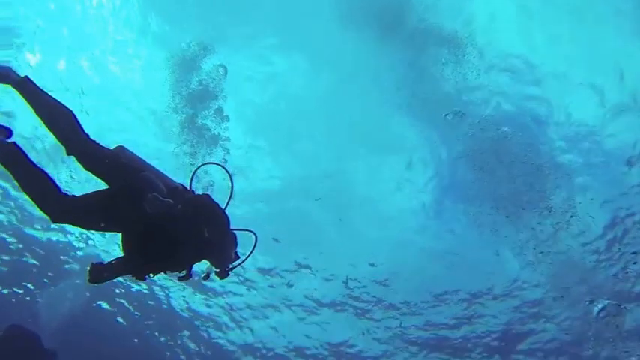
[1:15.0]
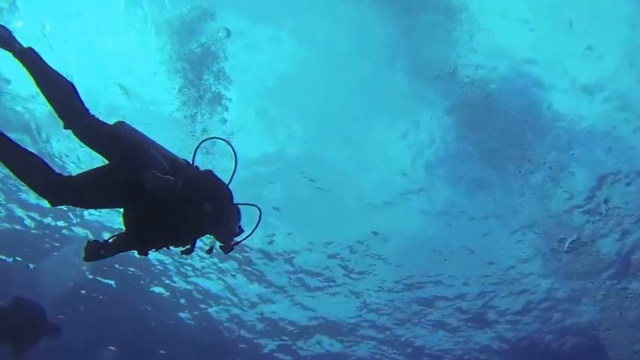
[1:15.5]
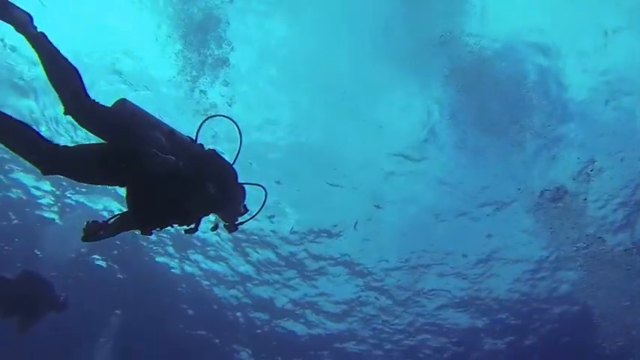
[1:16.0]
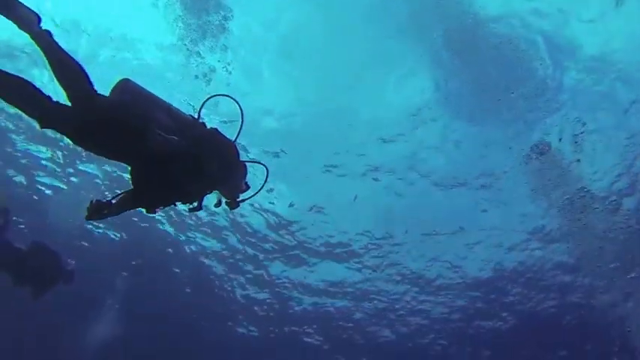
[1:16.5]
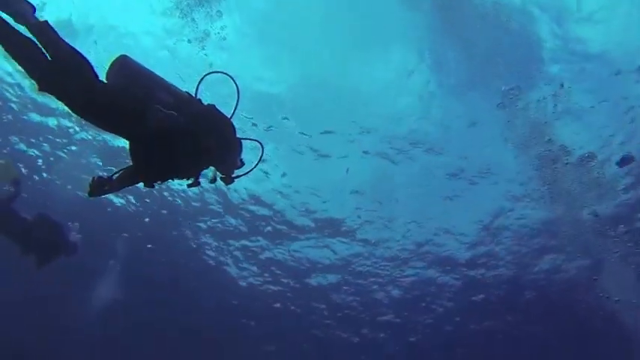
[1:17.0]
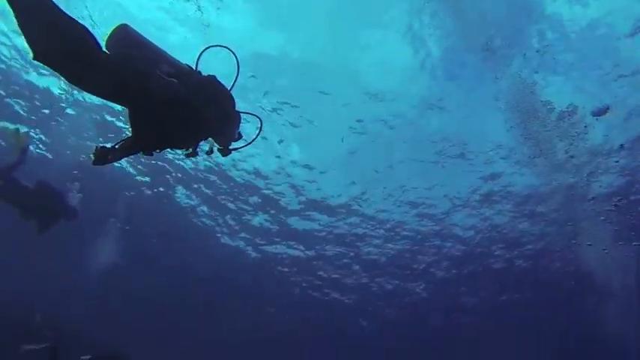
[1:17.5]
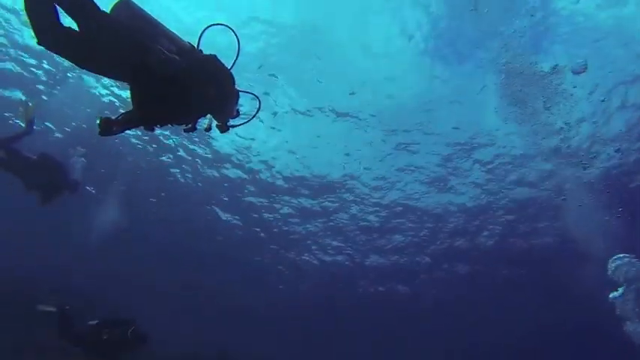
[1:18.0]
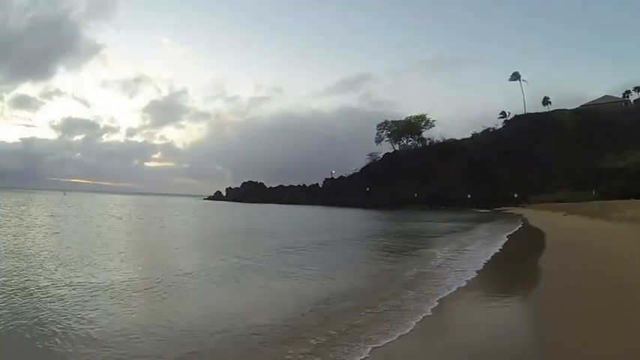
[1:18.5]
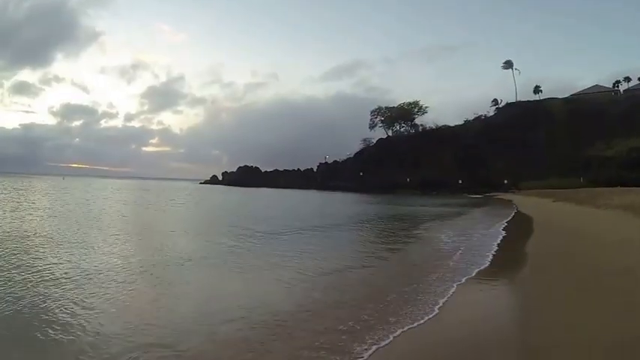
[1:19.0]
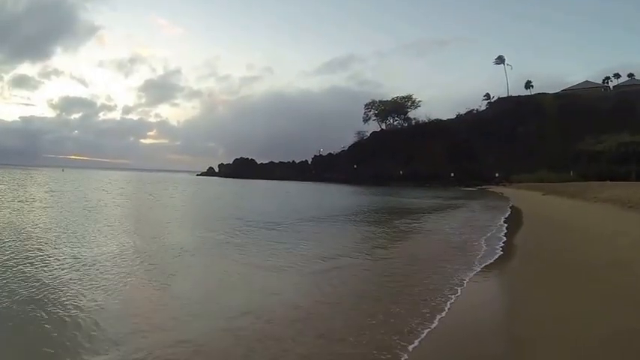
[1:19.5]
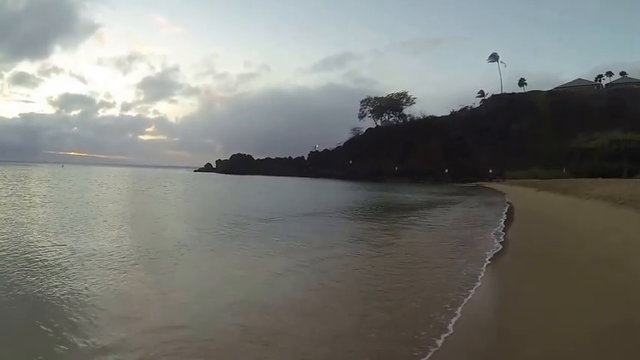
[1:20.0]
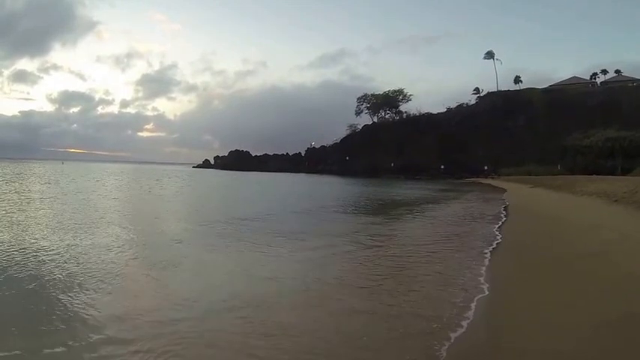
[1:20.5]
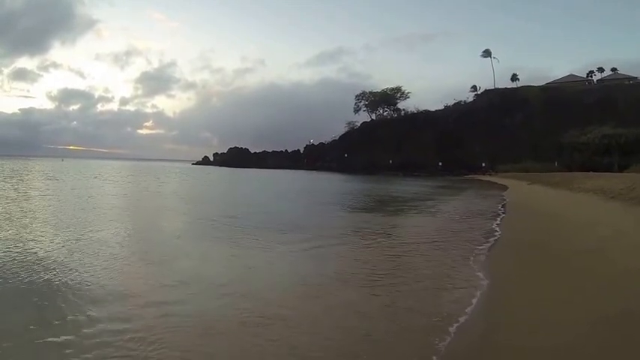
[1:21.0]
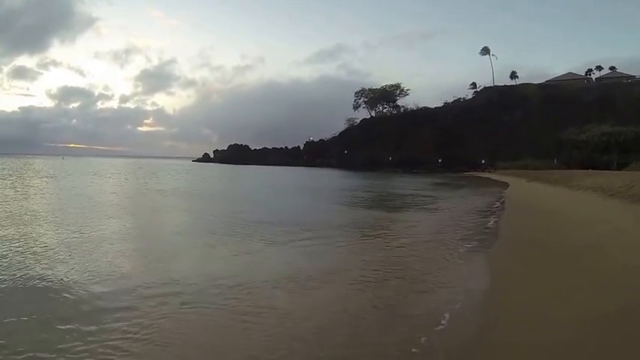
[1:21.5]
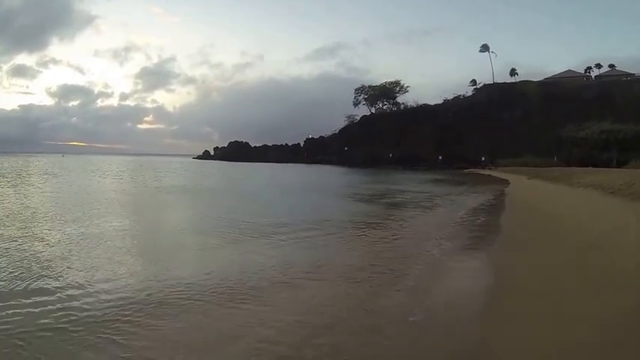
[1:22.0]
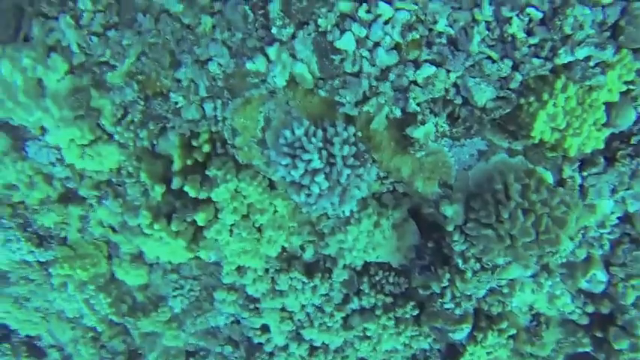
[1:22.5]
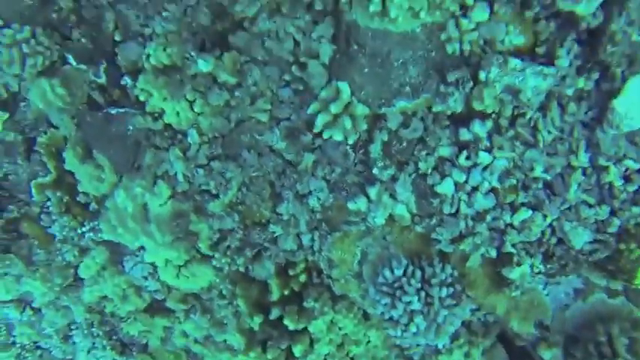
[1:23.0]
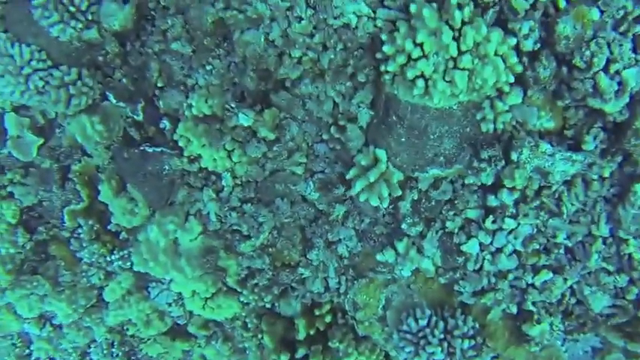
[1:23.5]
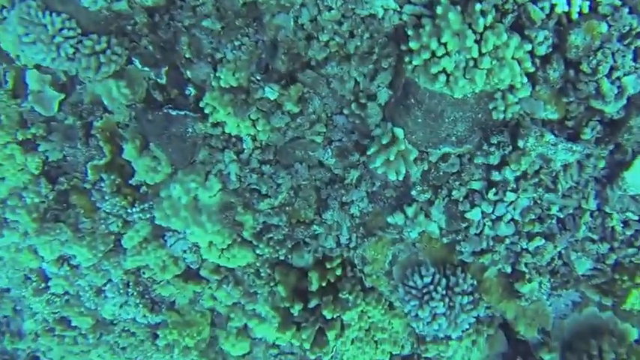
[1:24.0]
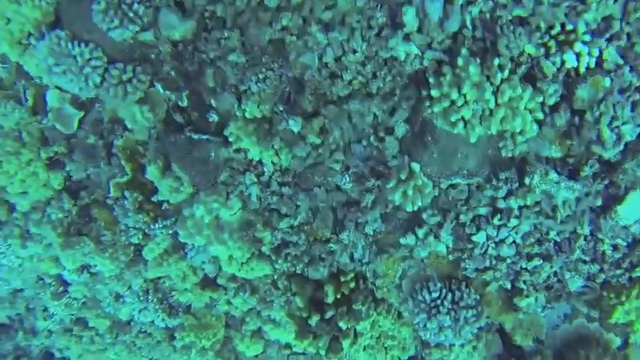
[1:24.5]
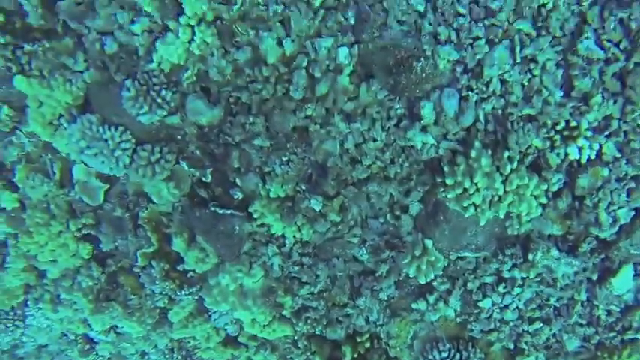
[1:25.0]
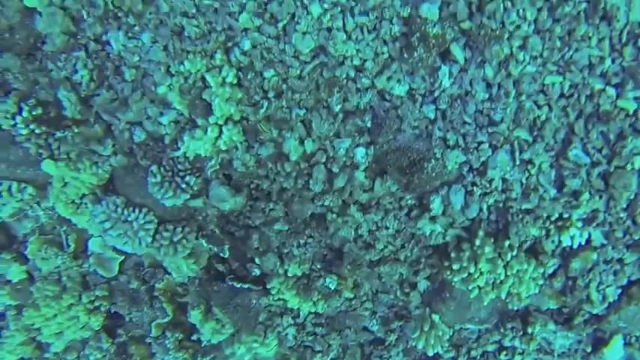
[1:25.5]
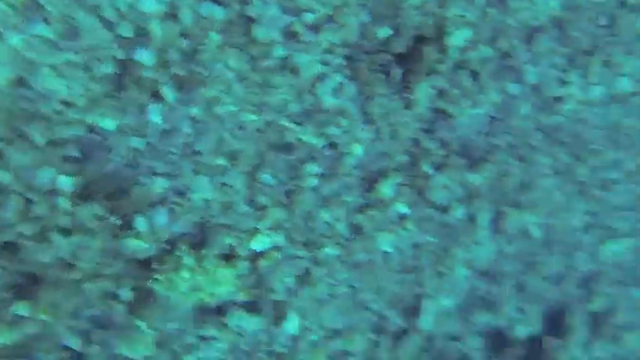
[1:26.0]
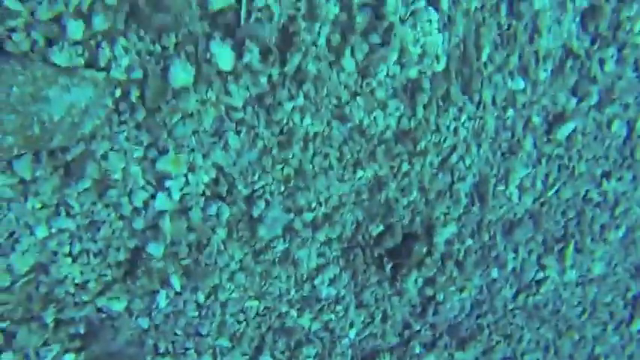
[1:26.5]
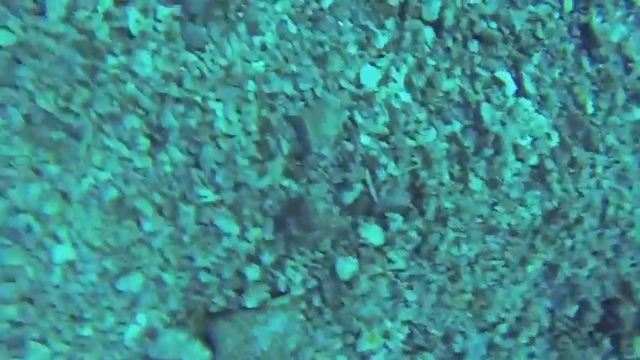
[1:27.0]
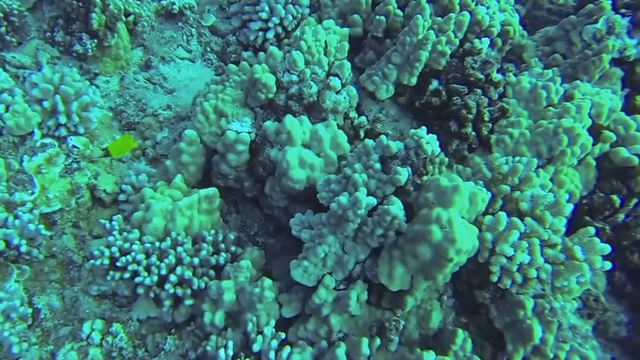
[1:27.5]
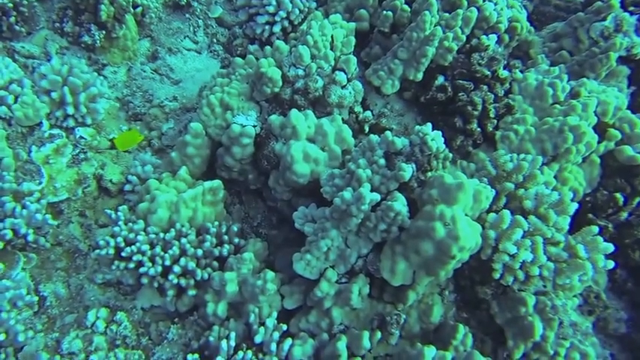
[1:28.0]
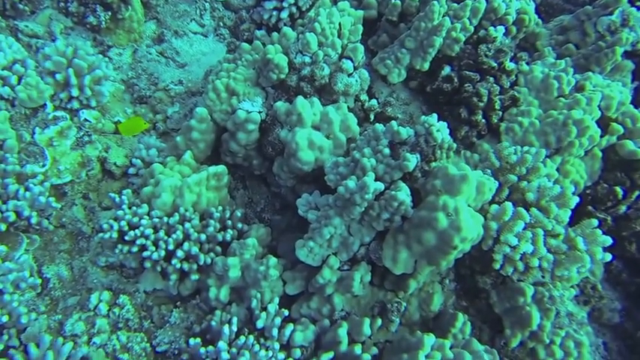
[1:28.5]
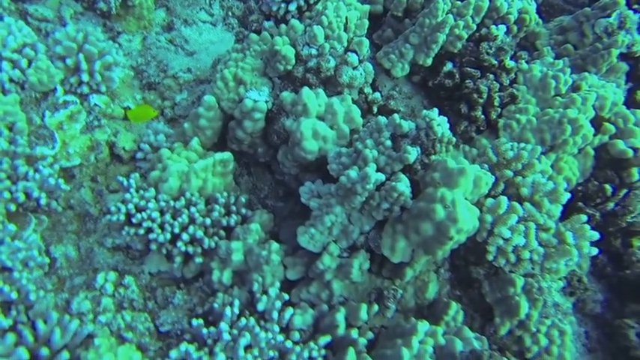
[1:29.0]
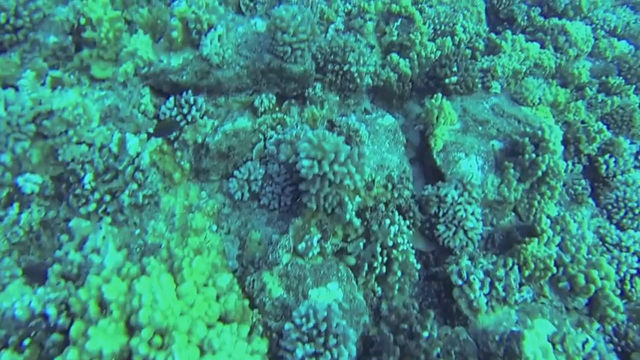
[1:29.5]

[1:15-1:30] A person in scuba gear floats in the water, with light and dark blue shades of water above them. Their air tank, tubing, and the black gear they wear to float through the water are visible, and a second person is just off to the left. The scene shifts to the beach: there is brown sand on the right and trees up on the ridge above, where it is a bit black. The sky is grayish, with a bit of white sunlight going over the tops on the left. The water is a calm grayish color, with a little white line from the waves reaching the shore. The caption at the top reads "GoPro Hawaii scuba diving", alongside a cartoon image of what looks to be a man with a beard. The next scene looks to be underwater at a coral reef, with light green to gray colors. Closer up, the coral almost looks like mashed potatoes, but lime green, white and grayish in color.